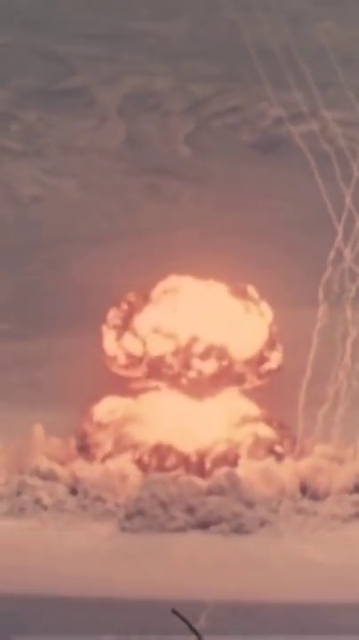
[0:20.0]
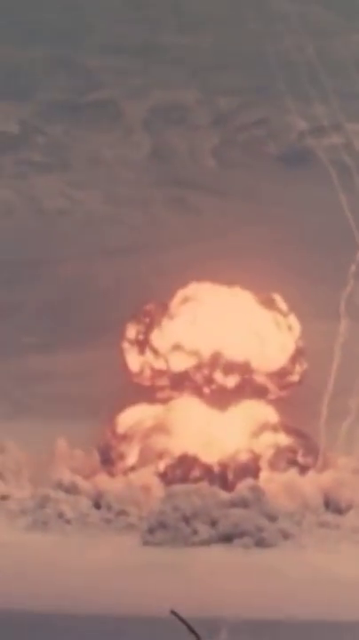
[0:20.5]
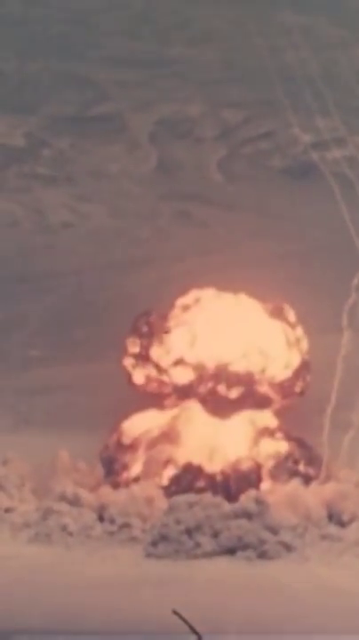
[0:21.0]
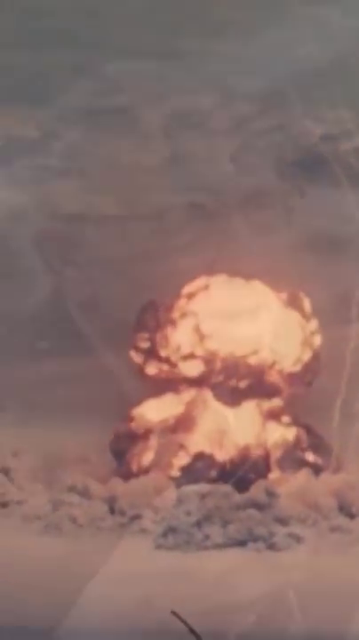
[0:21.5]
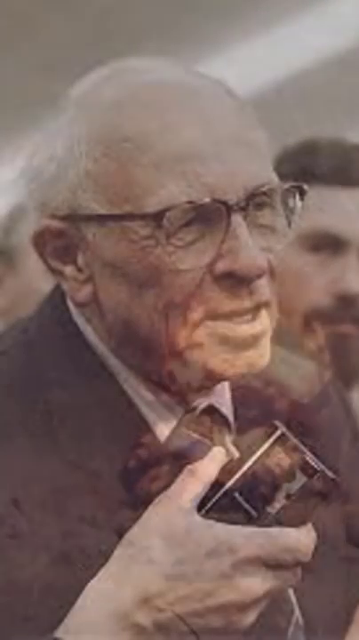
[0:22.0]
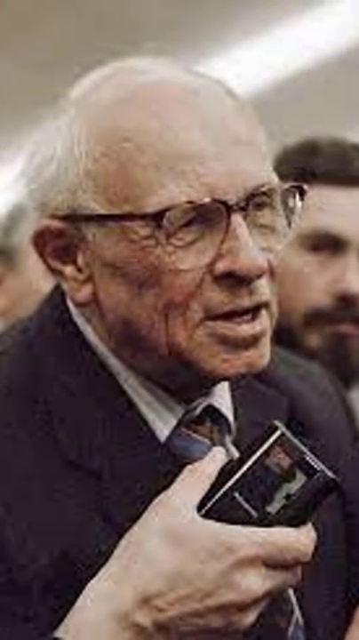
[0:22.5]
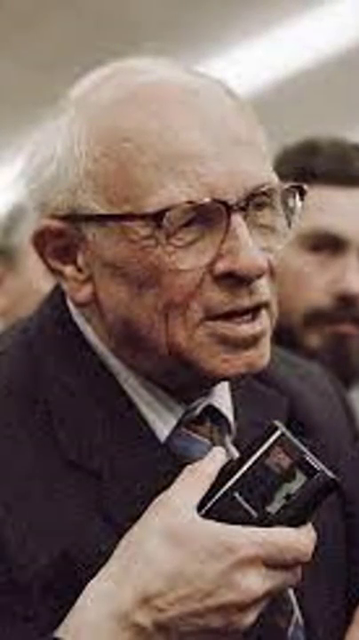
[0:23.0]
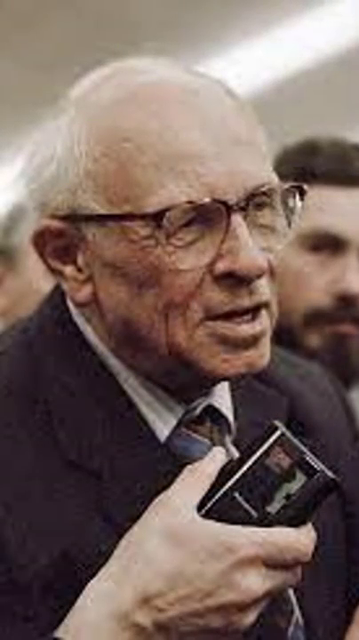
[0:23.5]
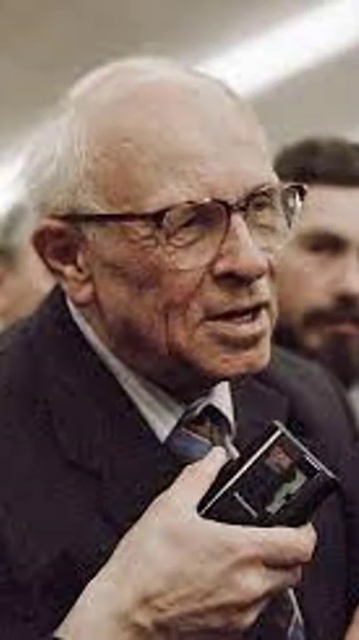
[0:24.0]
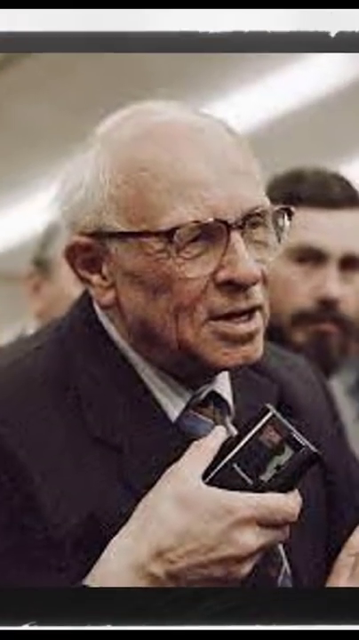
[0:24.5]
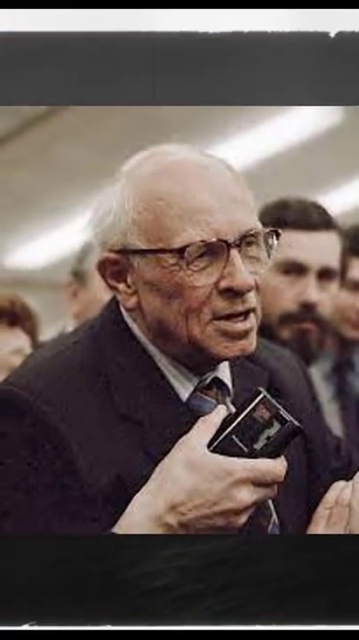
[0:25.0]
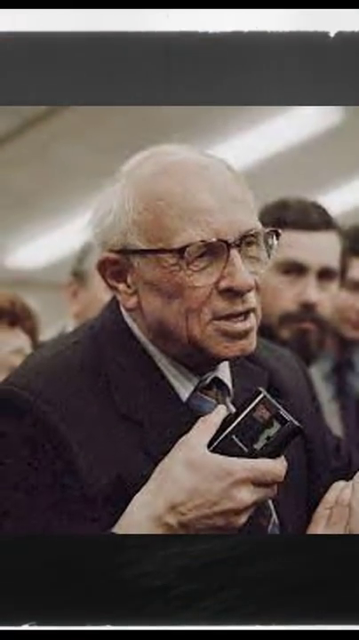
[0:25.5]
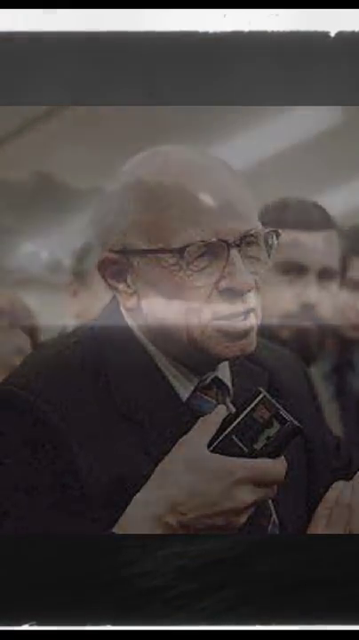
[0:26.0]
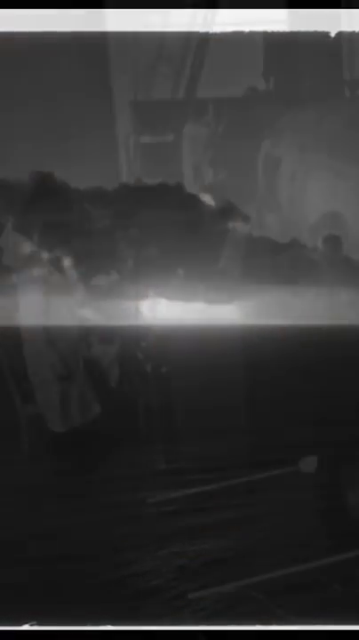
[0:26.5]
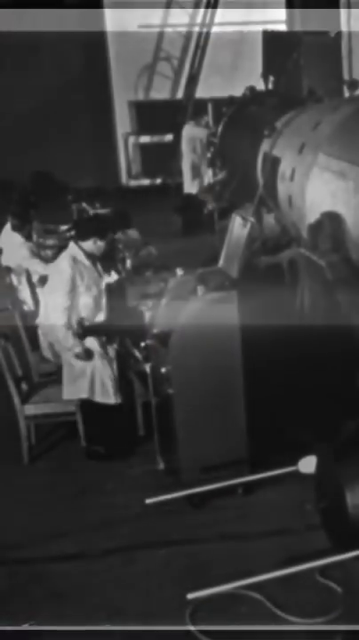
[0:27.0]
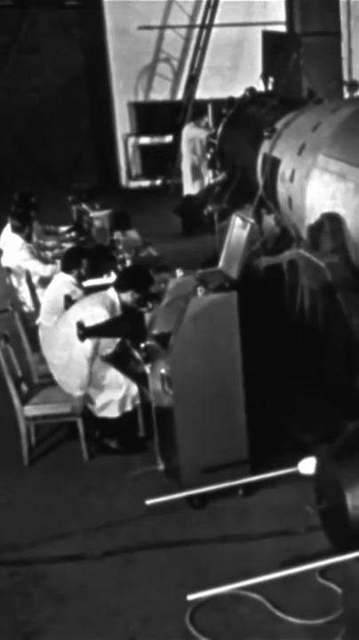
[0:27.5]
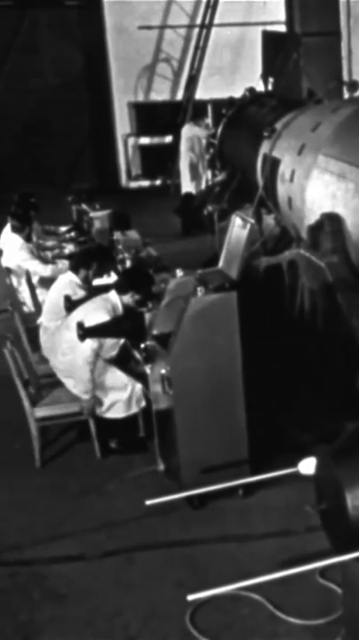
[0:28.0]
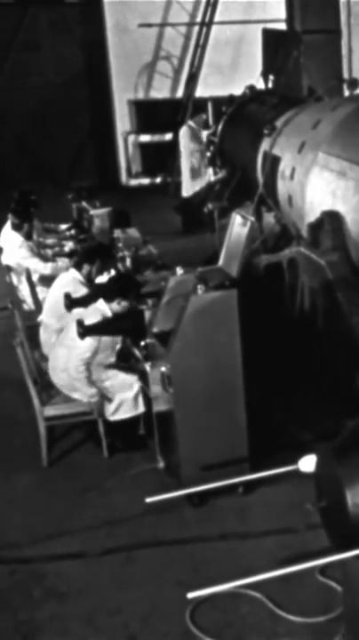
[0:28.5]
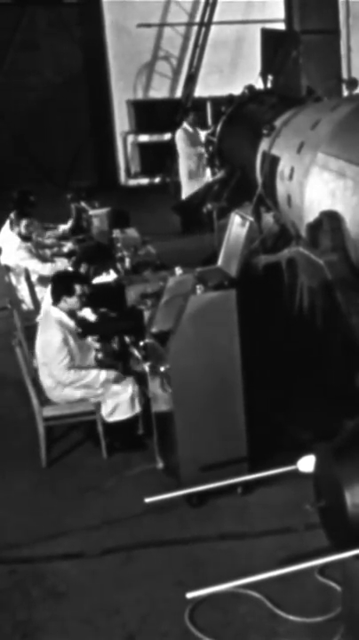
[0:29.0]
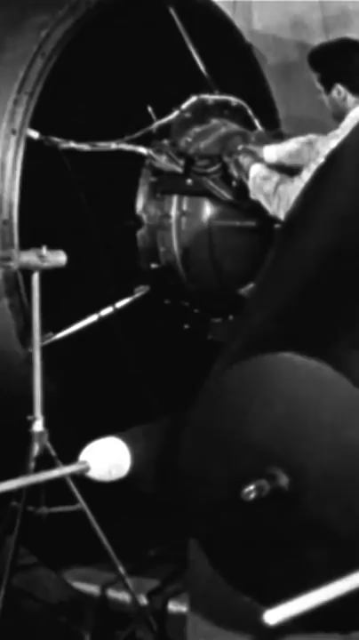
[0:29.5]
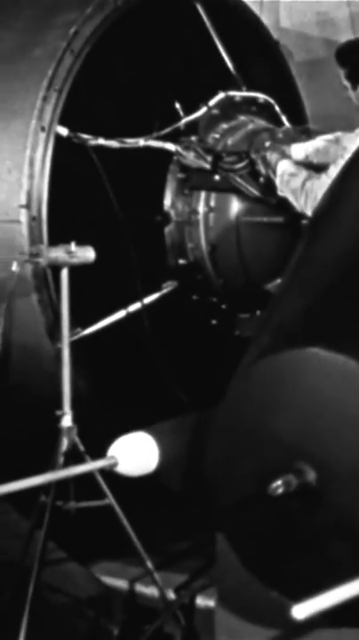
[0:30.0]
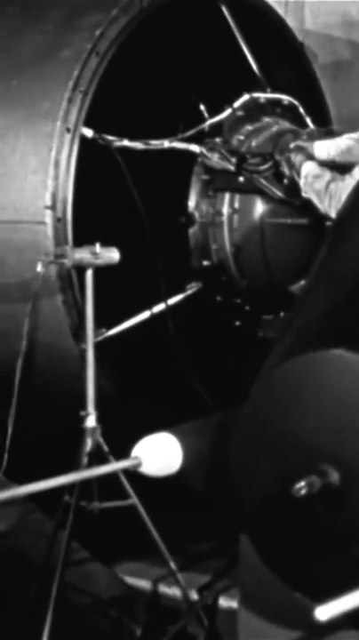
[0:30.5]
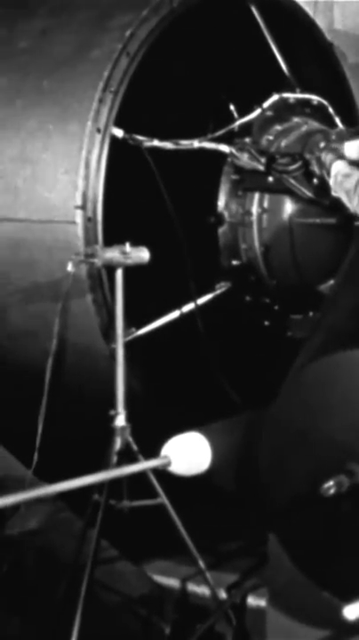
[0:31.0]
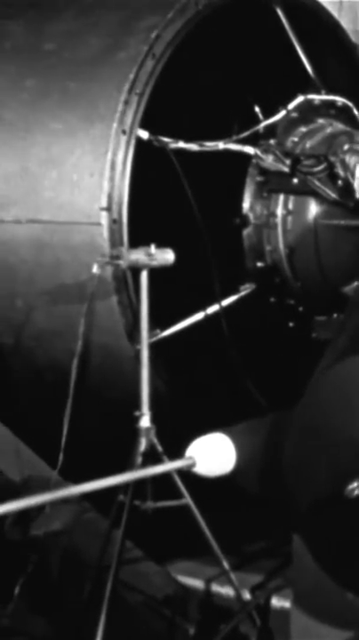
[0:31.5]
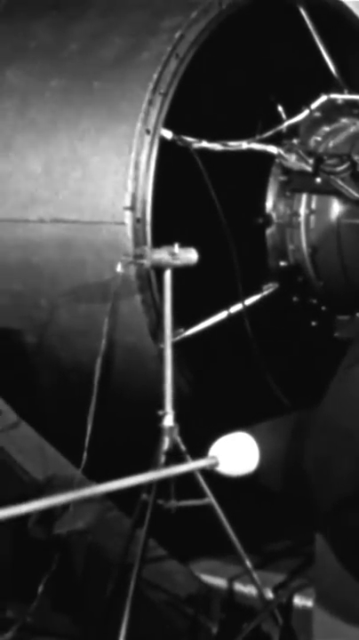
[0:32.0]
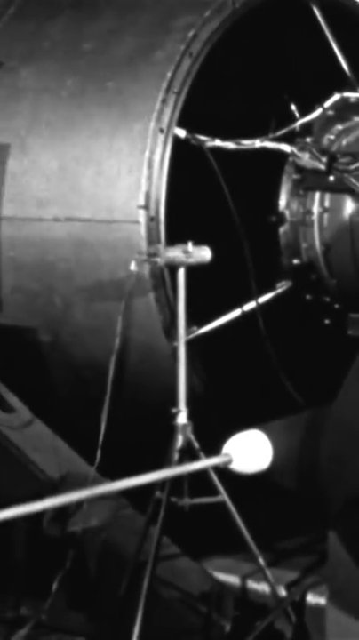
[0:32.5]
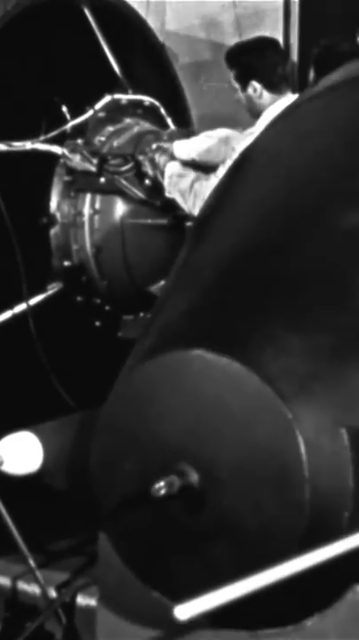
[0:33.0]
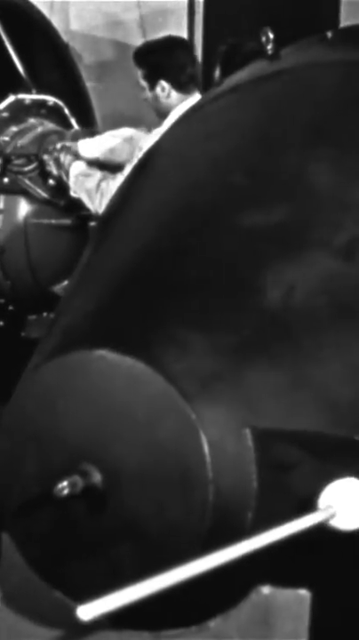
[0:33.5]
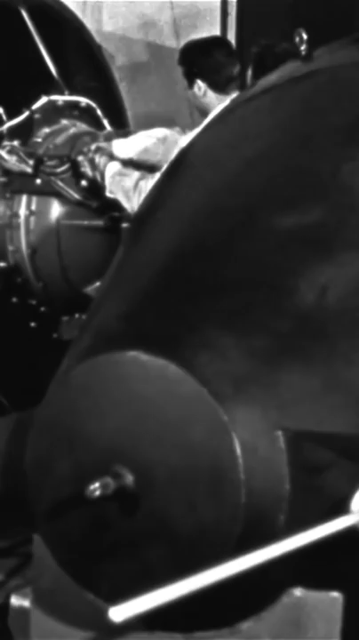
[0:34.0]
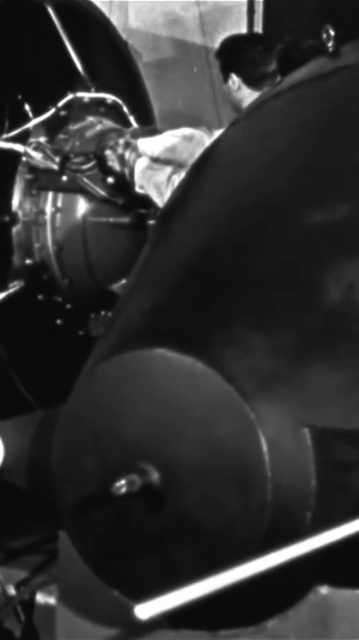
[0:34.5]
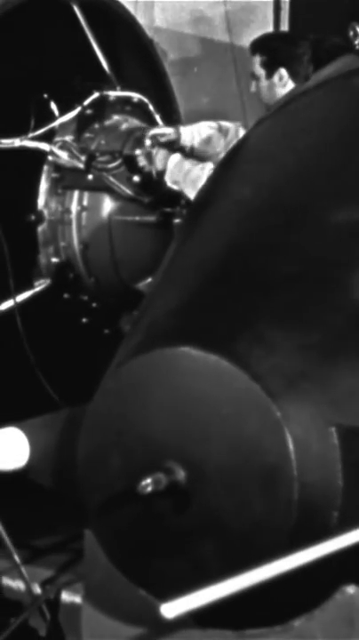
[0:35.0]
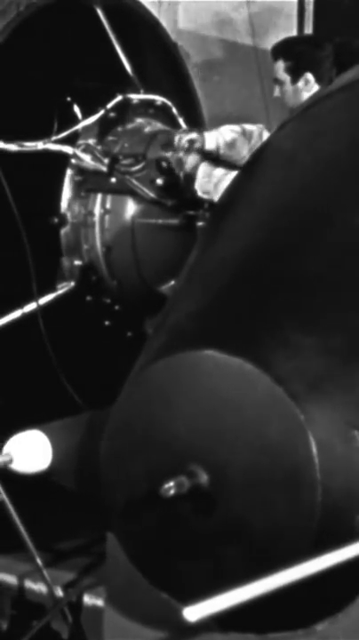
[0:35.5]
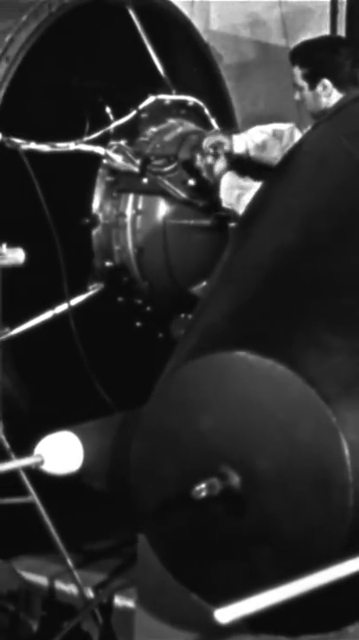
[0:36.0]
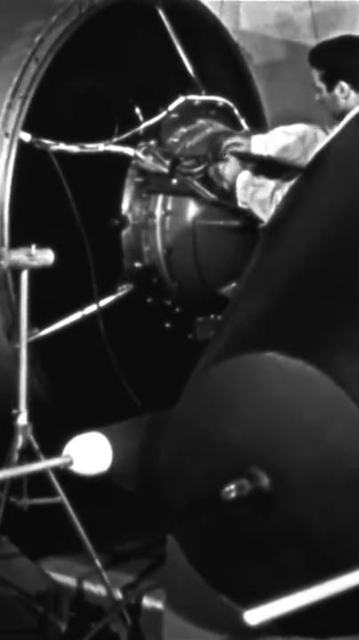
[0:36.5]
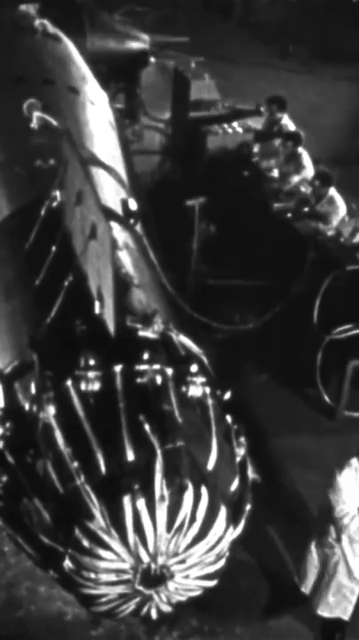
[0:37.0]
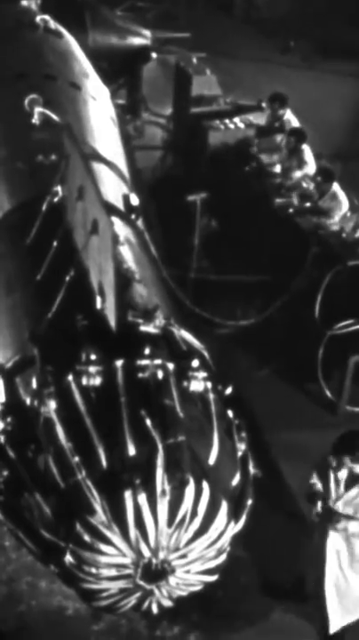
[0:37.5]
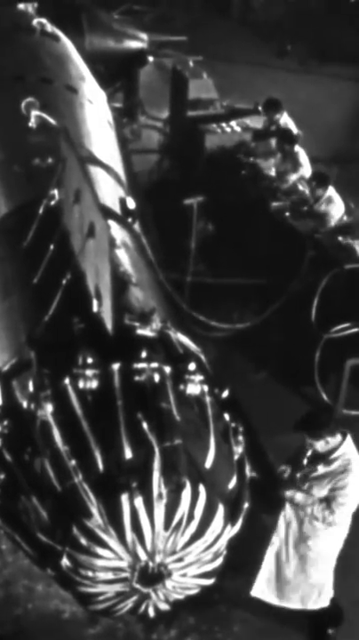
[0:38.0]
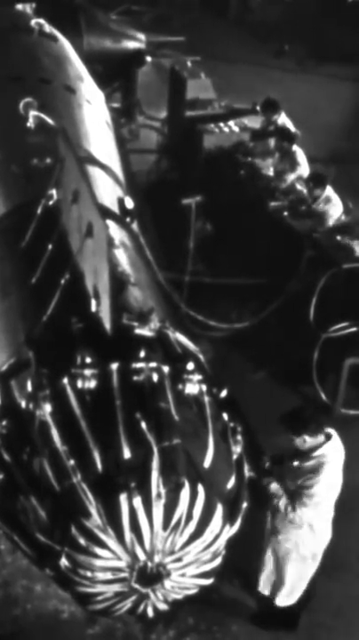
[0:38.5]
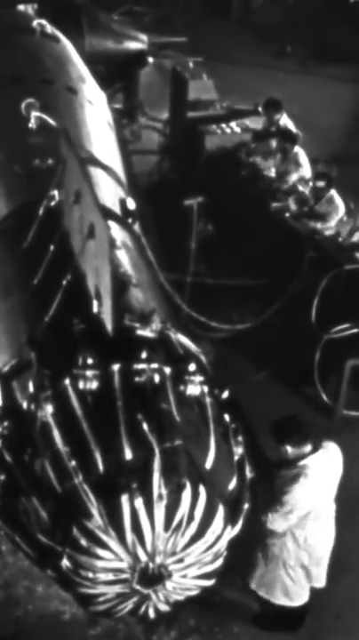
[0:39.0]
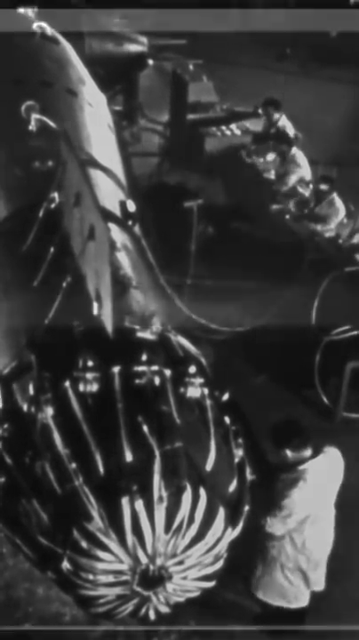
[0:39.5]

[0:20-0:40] A mushroom cloud from an atomic explosion fades to an image of an elderly white man with spectacles who has a recorder placed close to his face. Next comes a gray, depressing sky full of clouds that are likely exhaust from the explosion. The image then fades to the factory where the explosives were produced, with many engineers and scientists fiddling with wiring to create atomic bombs. The men are all working in the factory to produce several of these devices at once.